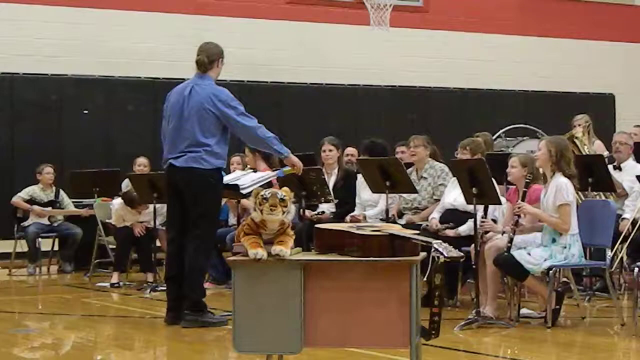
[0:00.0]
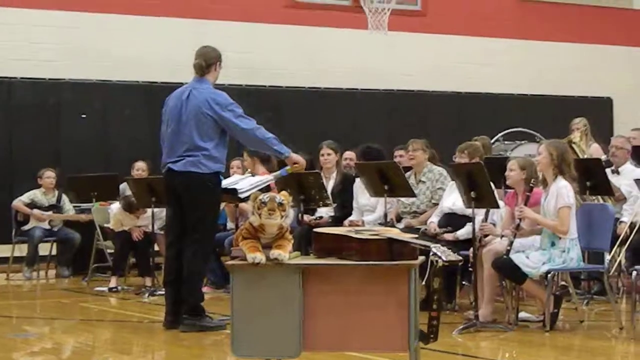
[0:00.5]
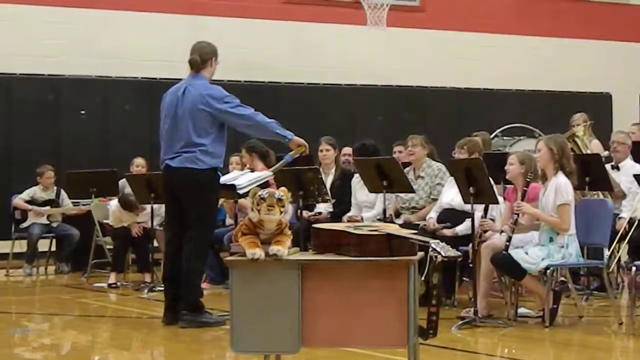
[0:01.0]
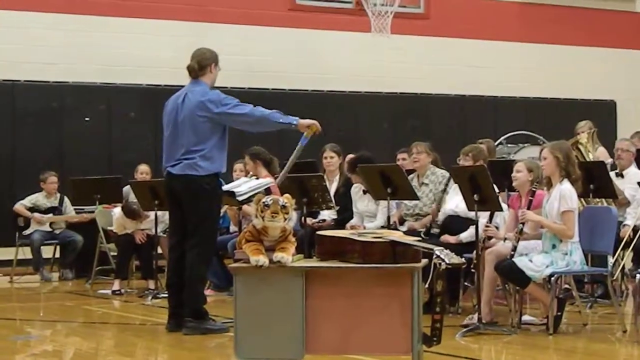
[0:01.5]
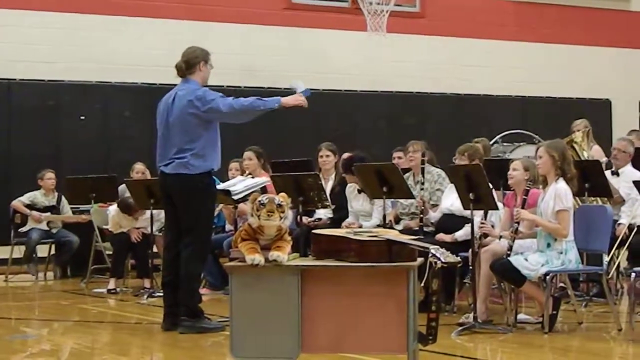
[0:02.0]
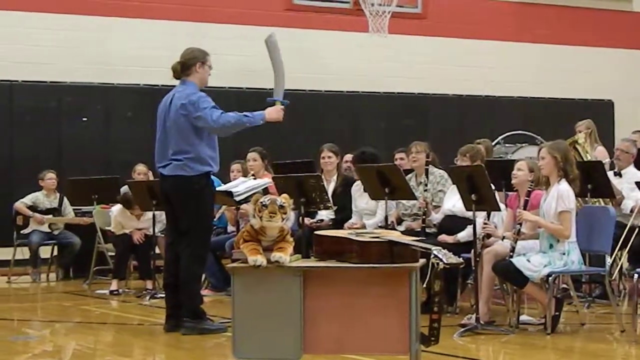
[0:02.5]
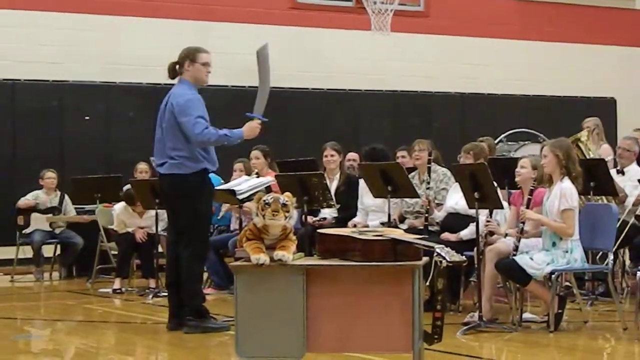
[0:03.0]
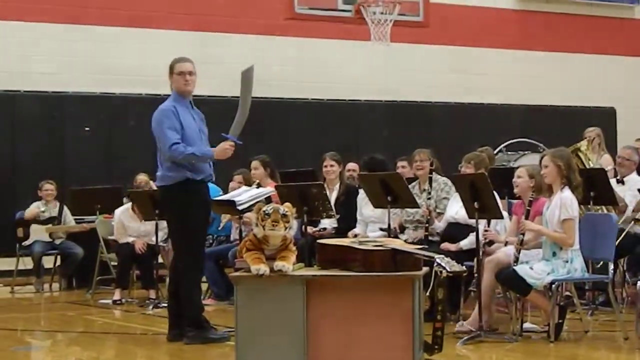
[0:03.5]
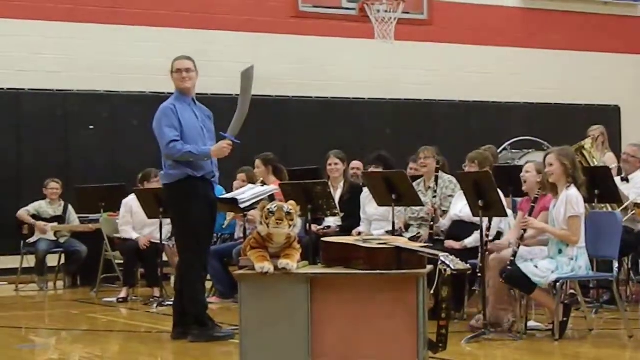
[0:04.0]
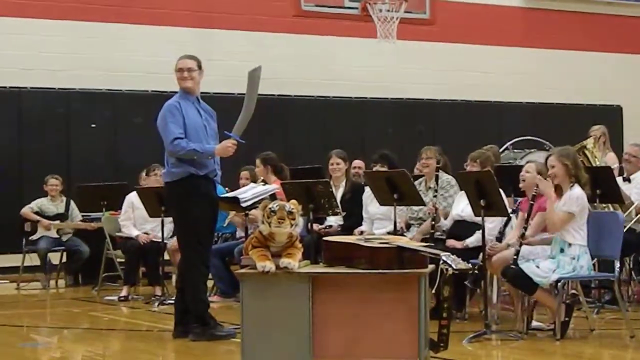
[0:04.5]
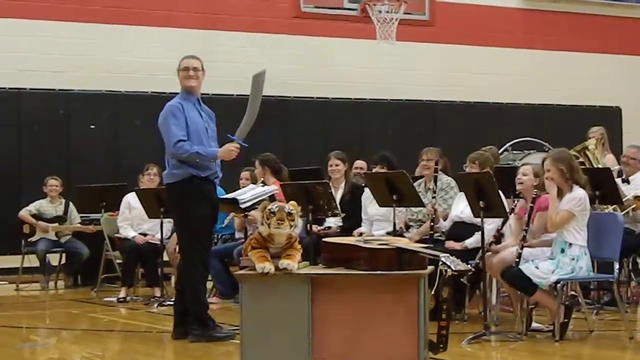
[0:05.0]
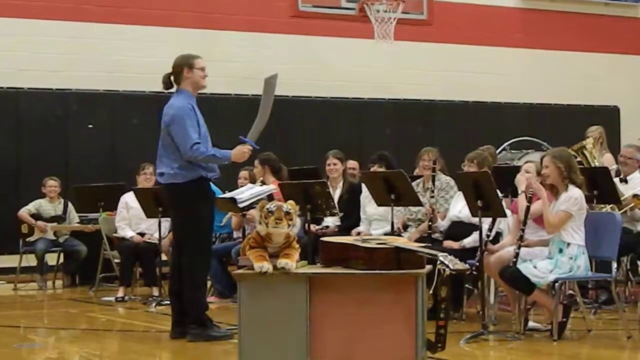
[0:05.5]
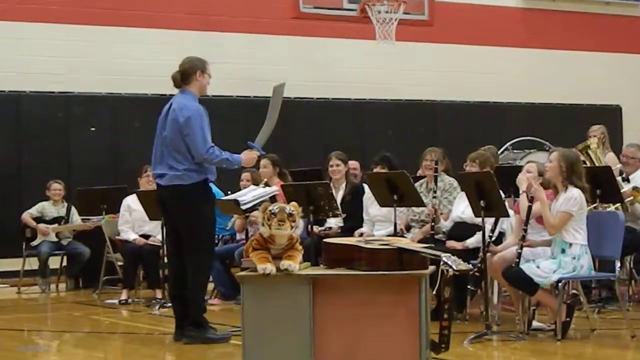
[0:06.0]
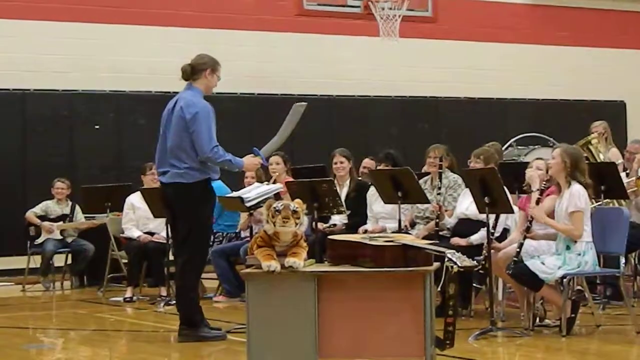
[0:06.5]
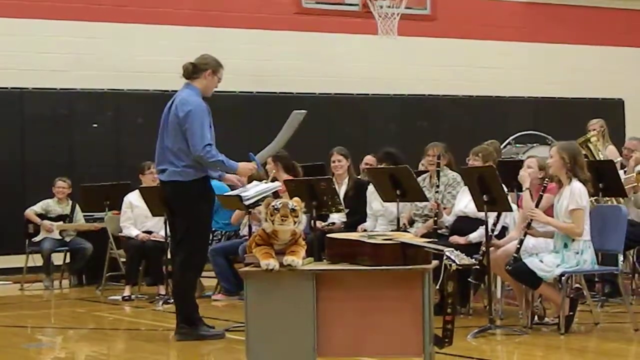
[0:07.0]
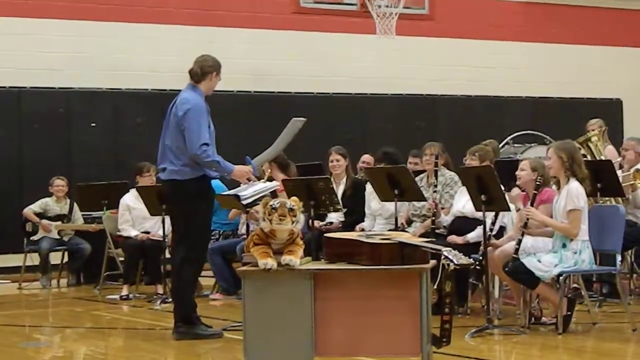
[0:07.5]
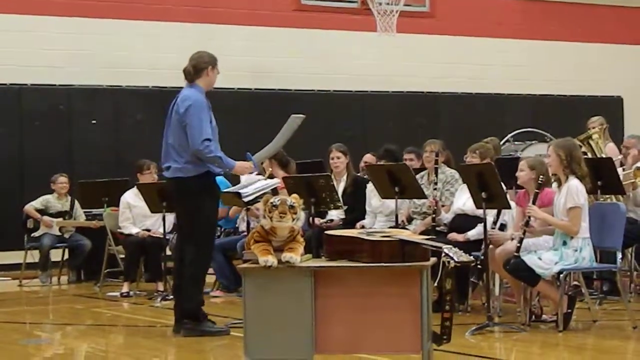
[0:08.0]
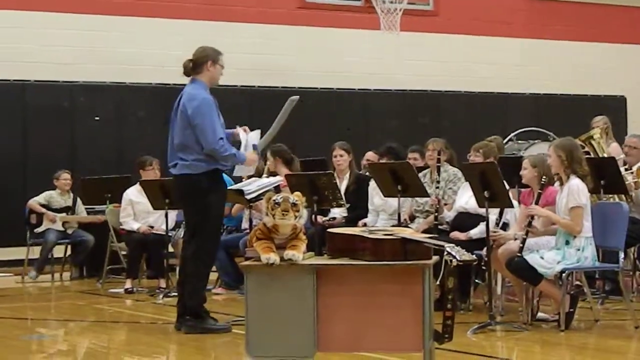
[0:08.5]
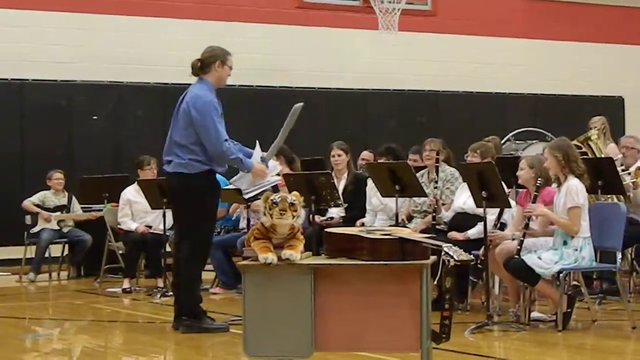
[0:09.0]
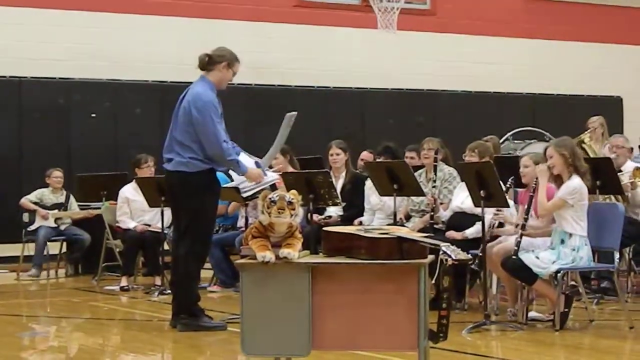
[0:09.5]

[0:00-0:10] A performance begins by what looks like a school band: a group of young people, probably in their early teens, sitting in chairs in front of music stands. Some of them hold instruments; one has a clarinet and one has a guitar. In front of the group is a male teacher wearing a long-sleeved blue shirt and black pants, who is about to conduct the band. At the start he holds what looks like a plastic sword in his hand and raises it. Next to him on a table are a stuffed tiger and a guitar on its side. Toward the back of the group there appear to be some adults mixed into the band, so it is not exclusively students, though it is mostly students toward the front.